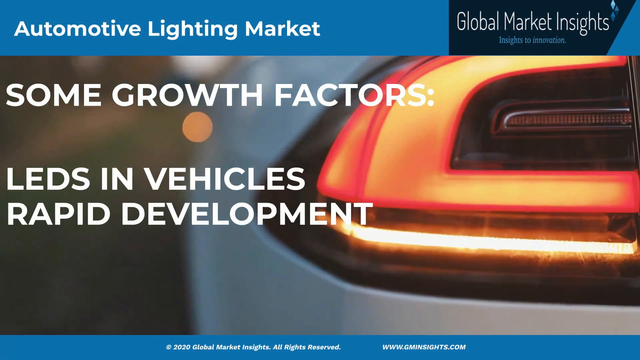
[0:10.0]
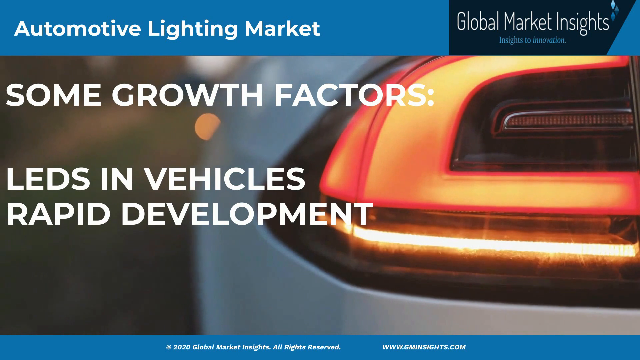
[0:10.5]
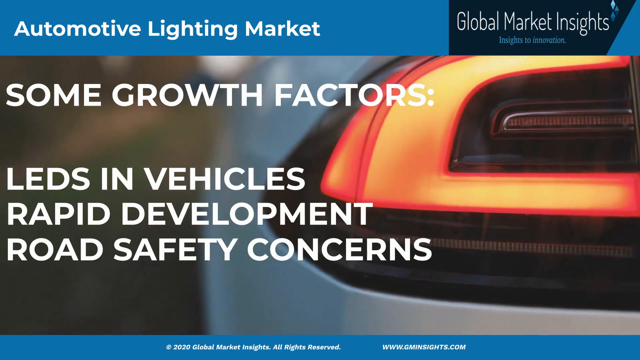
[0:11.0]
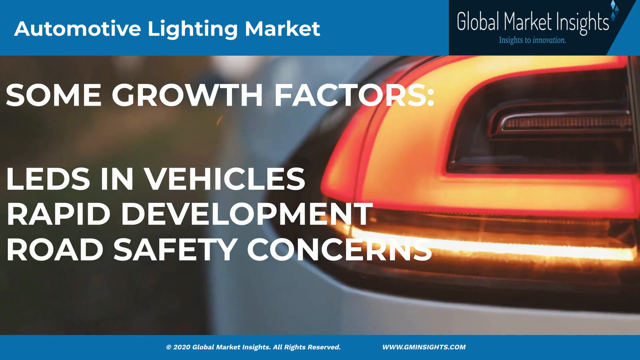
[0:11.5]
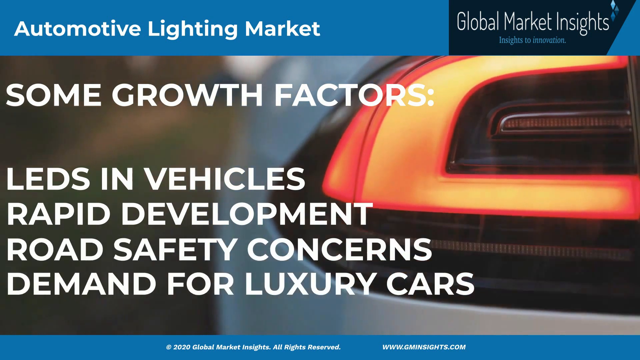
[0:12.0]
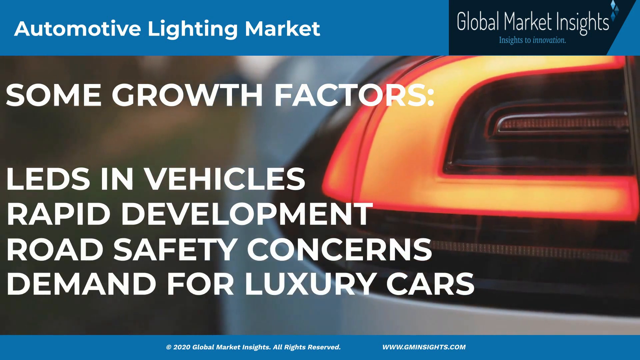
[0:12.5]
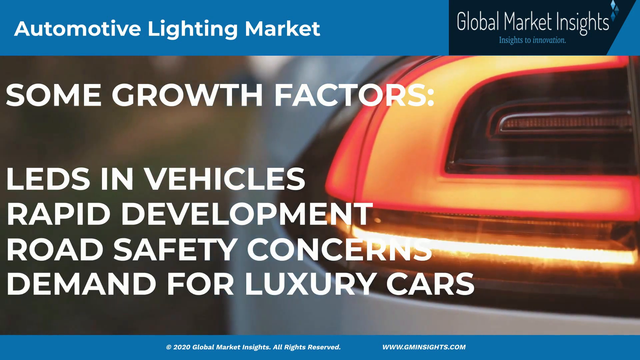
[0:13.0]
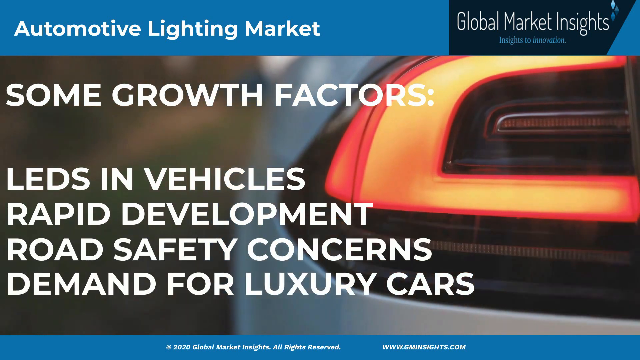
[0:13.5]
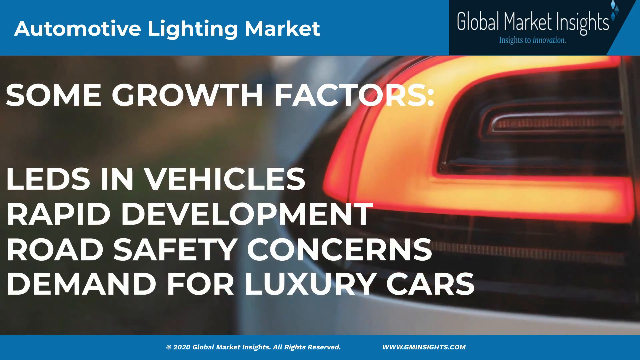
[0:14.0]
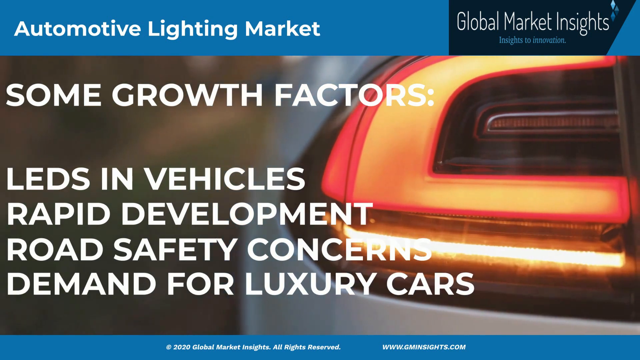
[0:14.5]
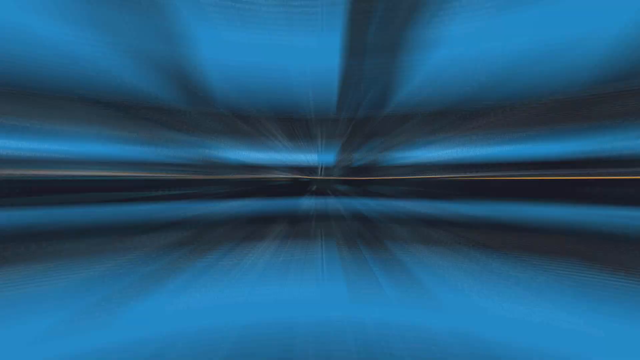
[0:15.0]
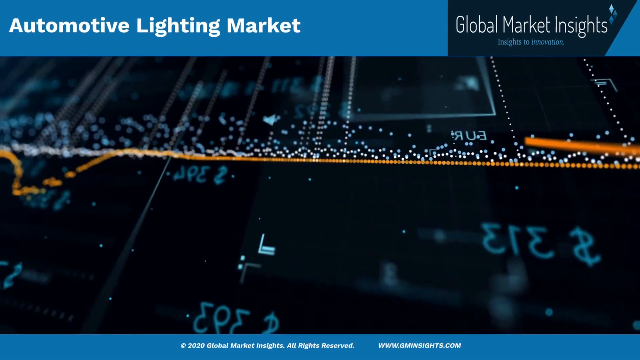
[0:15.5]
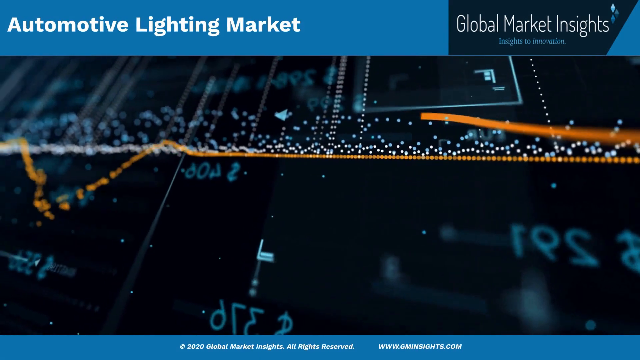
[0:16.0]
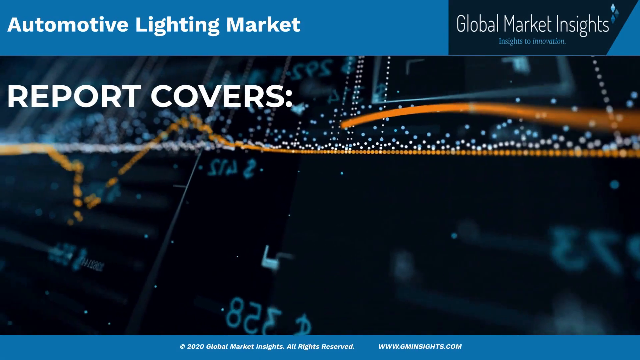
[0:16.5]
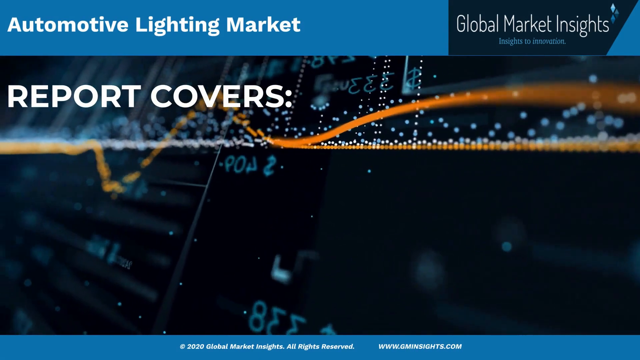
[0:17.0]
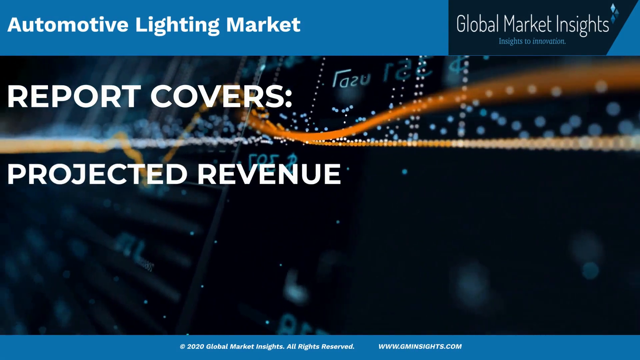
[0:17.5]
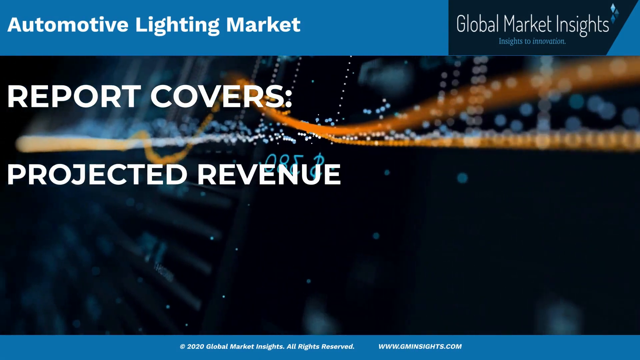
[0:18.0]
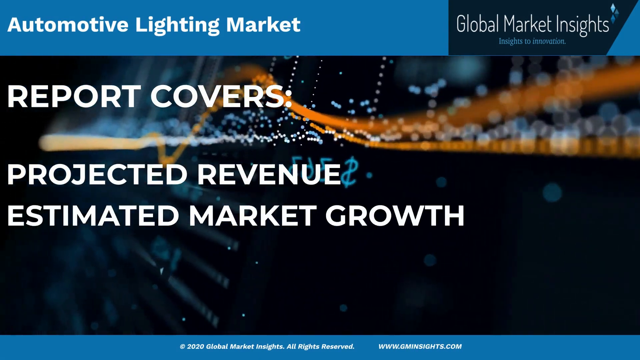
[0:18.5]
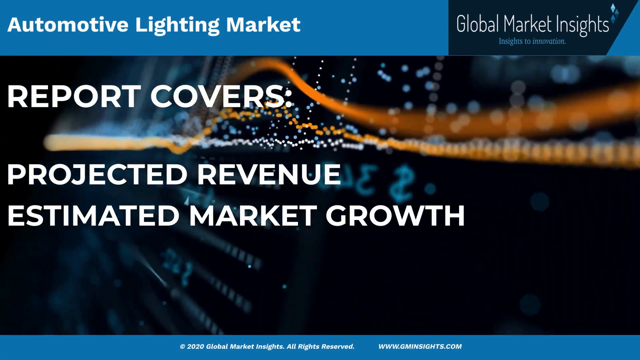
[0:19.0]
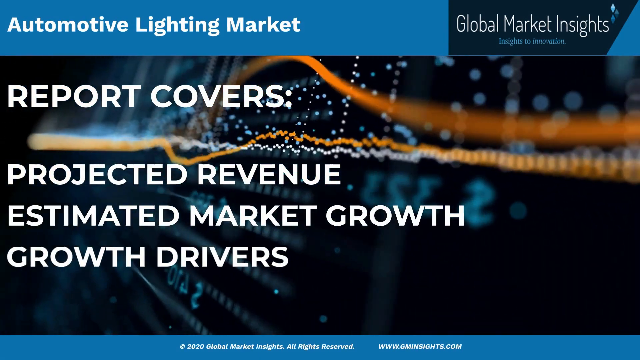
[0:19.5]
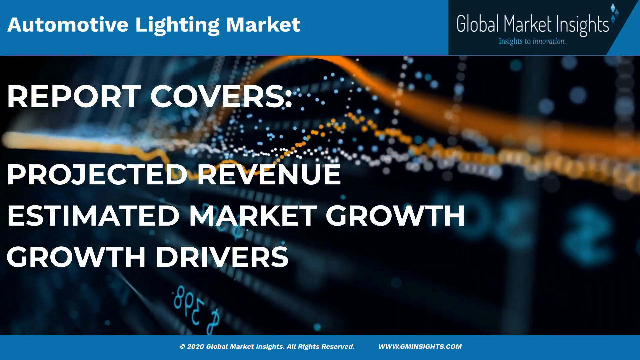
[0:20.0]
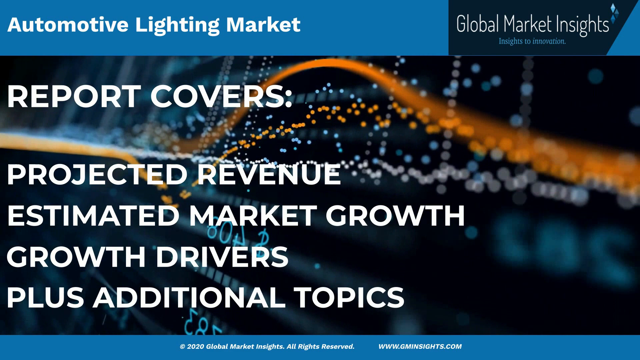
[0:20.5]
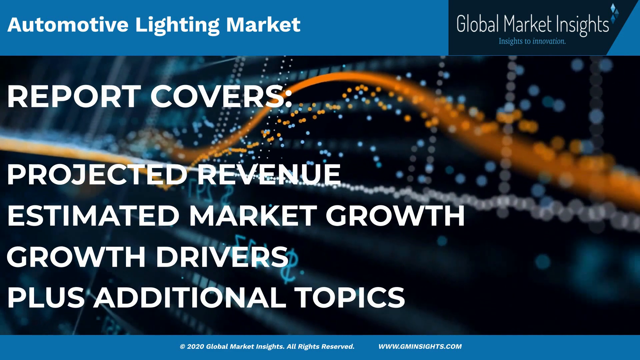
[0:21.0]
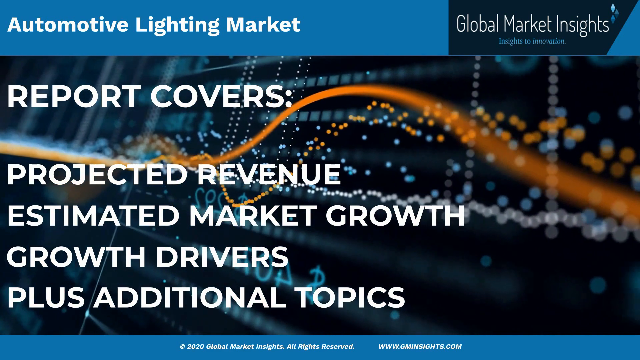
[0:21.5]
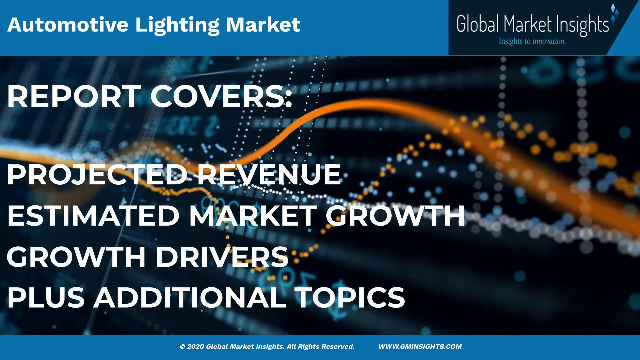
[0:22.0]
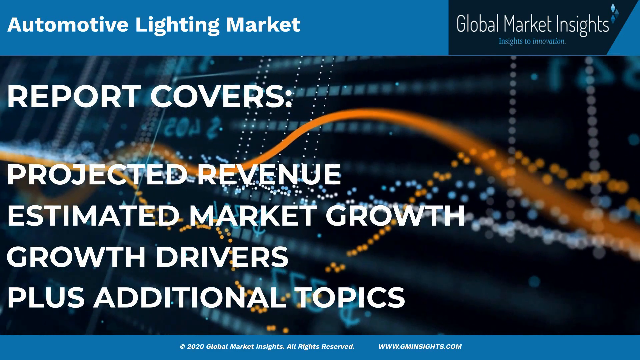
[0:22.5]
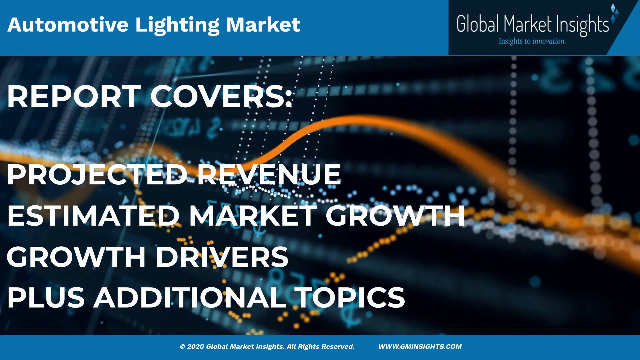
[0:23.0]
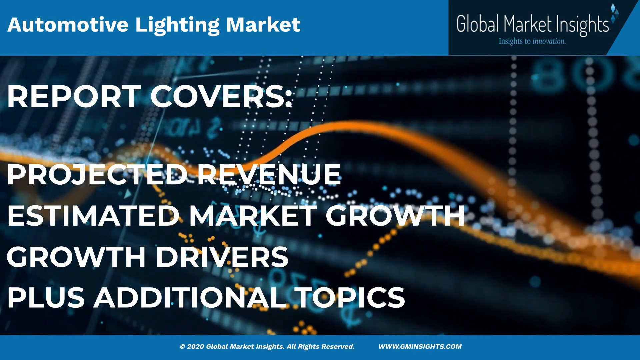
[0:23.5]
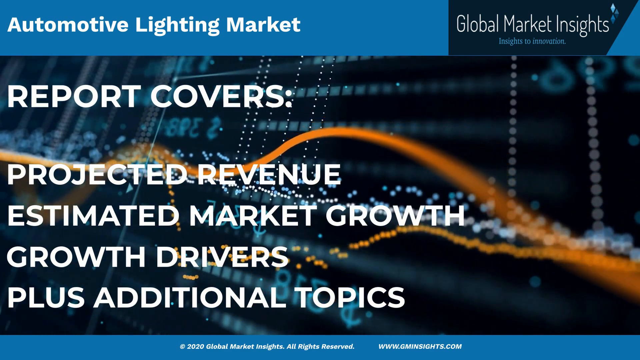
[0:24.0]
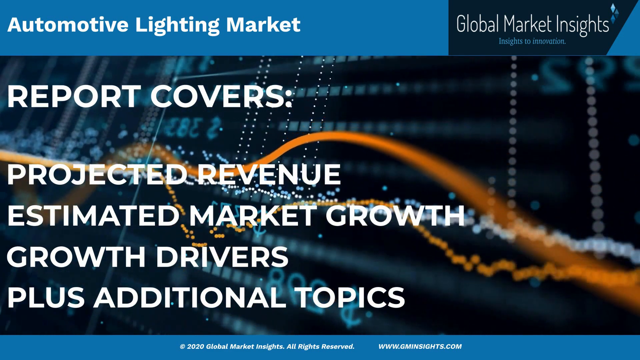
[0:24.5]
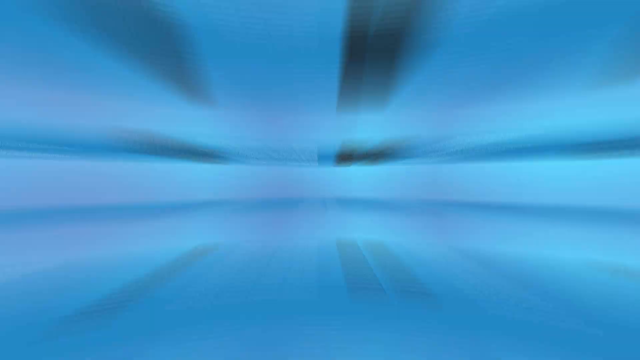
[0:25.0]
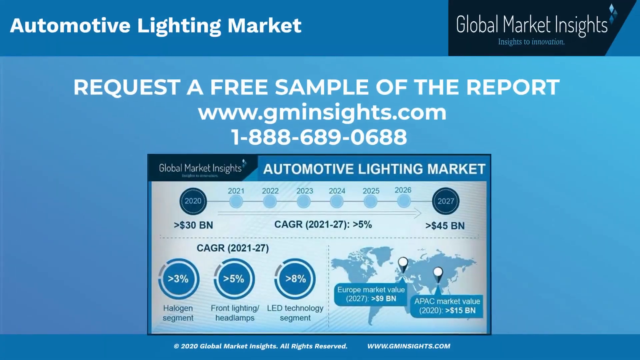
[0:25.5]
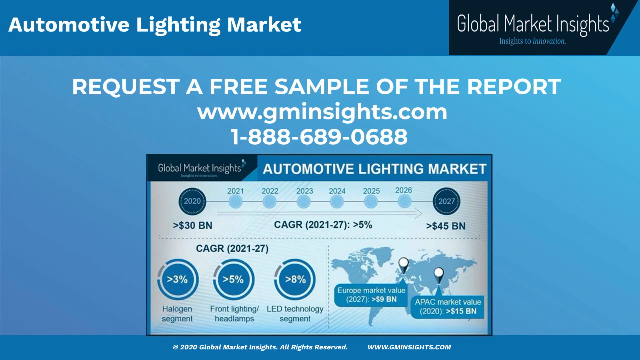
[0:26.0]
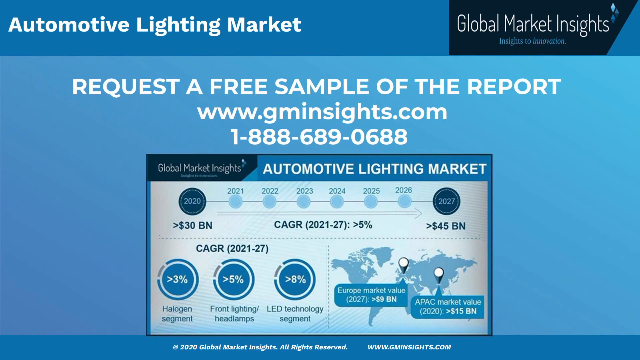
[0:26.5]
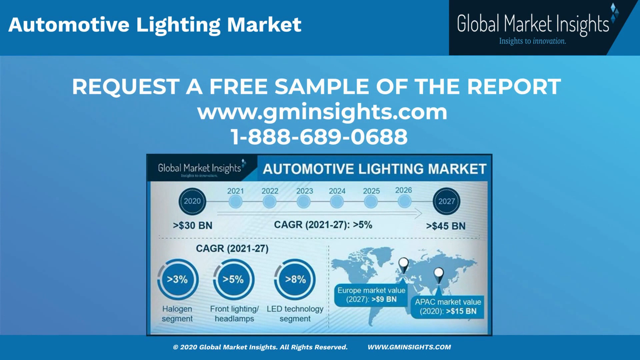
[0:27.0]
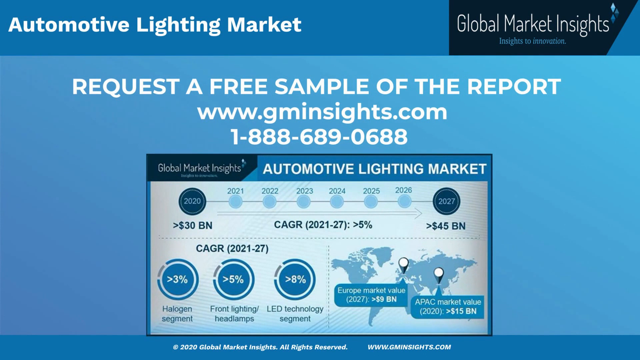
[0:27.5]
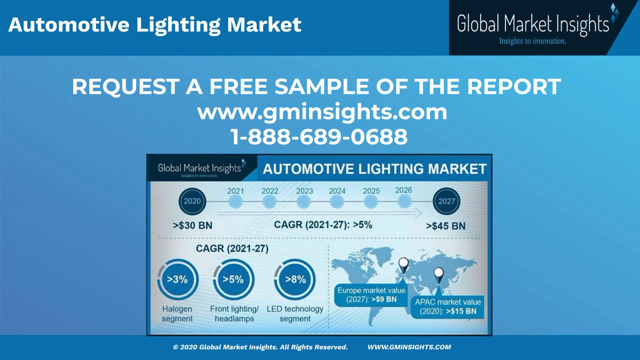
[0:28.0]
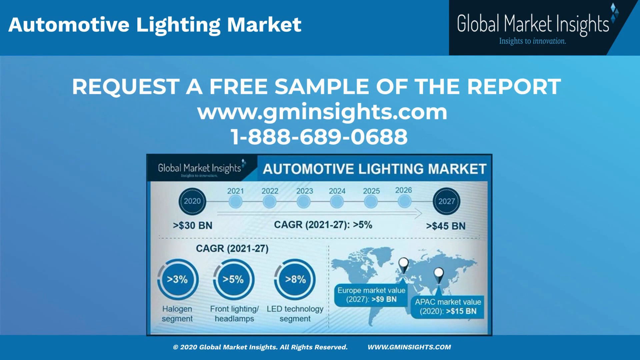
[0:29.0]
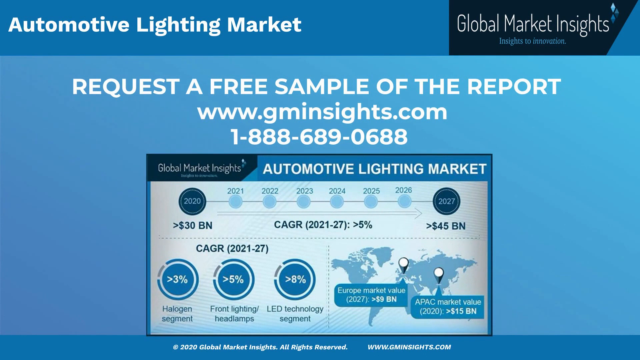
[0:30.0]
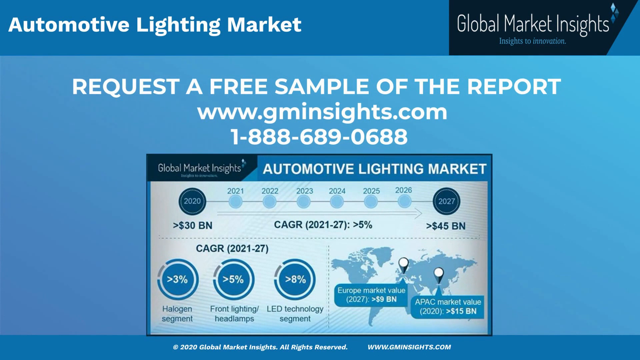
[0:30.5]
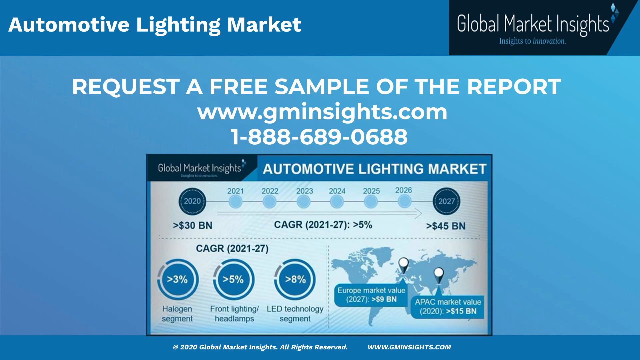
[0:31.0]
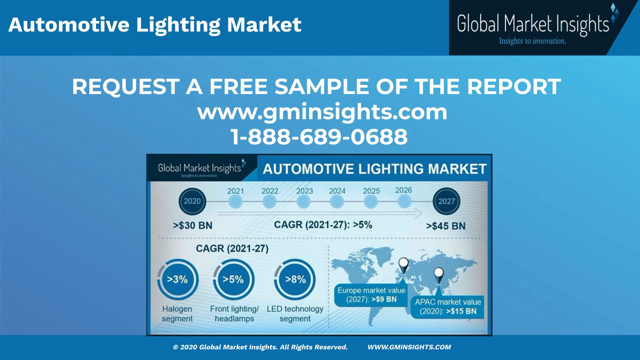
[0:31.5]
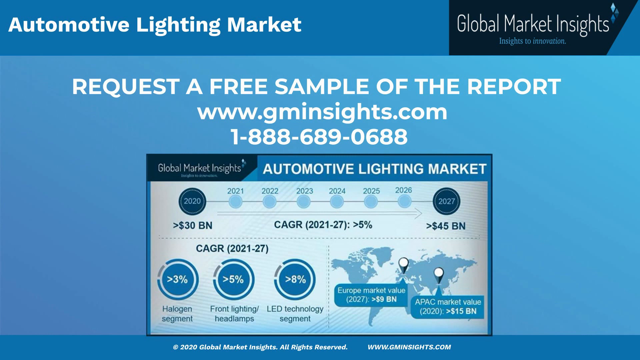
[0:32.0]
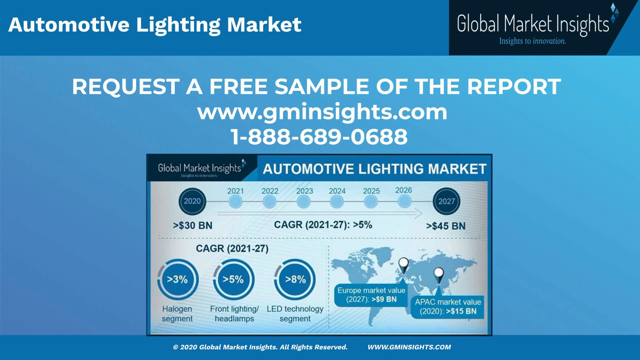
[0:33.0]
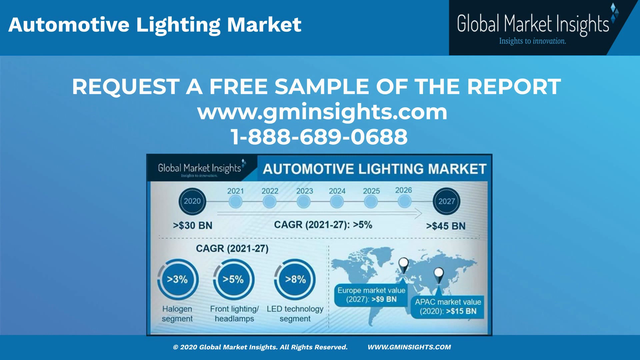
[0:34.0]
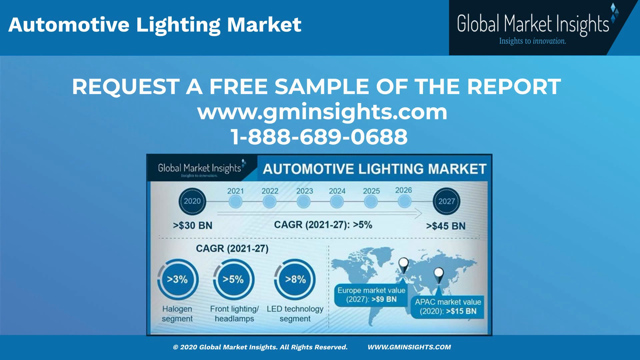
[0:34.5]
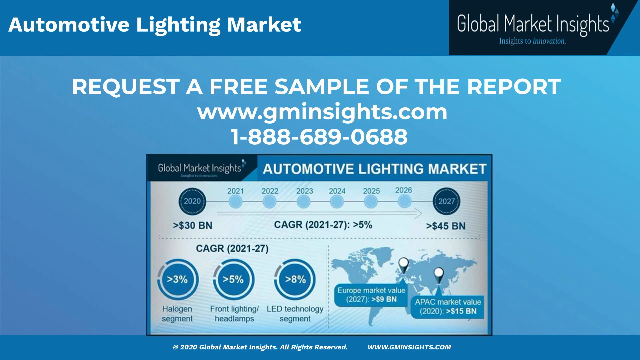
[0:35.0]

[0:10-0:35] The slideshow continues. White letters over racing cars on the highway say "surpassed USD 30 billion in 2020 expected CAGR of 5% between 2021 and 2027." Then the text says "leads and vehicles rapid development road safety concerns and demands for luxury cars." The screen changes to white text over a line graph that goes up and down, reading "report covers projected revenue estimated market growth and growth drivers," along with "plus additional topics." Numbers appear to be calculating. Then the text says "request a free sample of the report www.gminsites.com," followed by the phone number 1886890688. A picture of the PowerPoint appears with "www.gminsites.com."